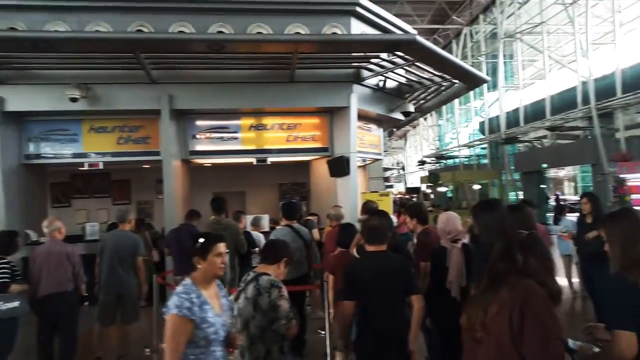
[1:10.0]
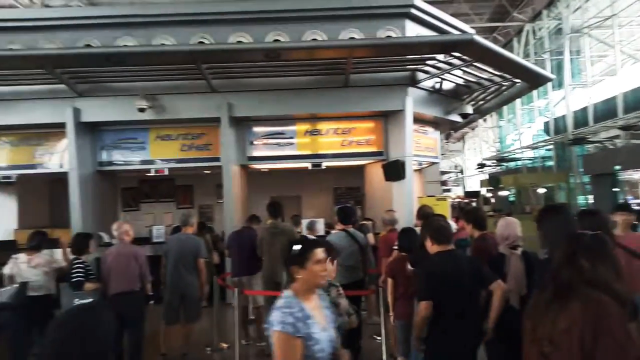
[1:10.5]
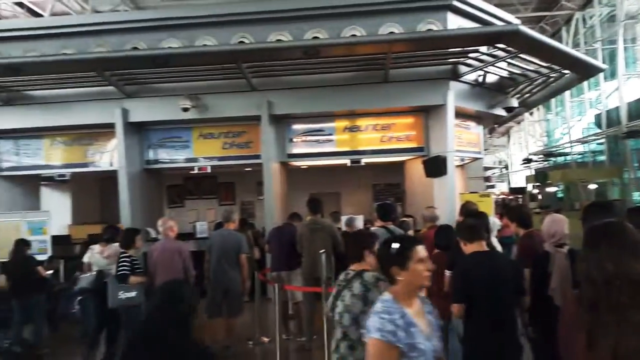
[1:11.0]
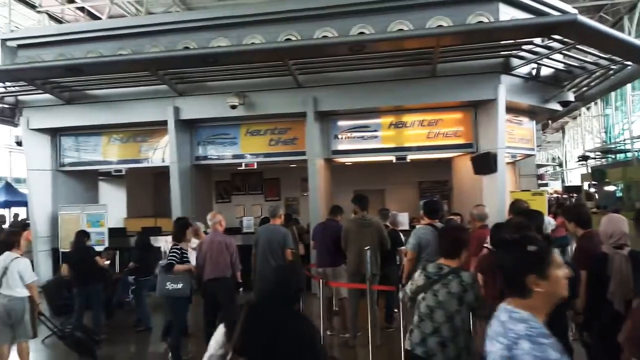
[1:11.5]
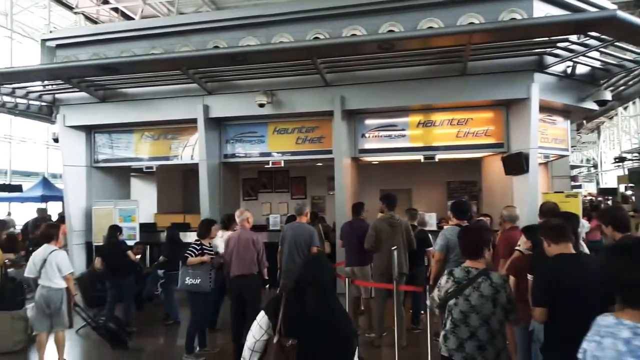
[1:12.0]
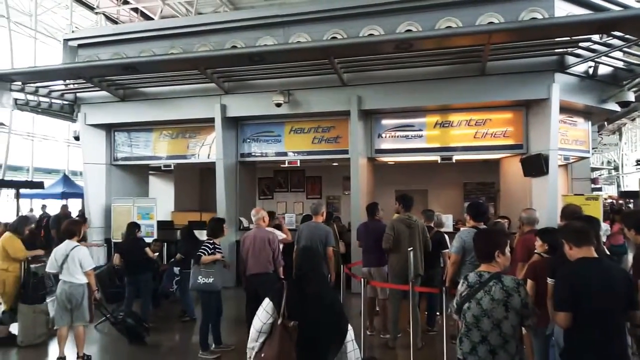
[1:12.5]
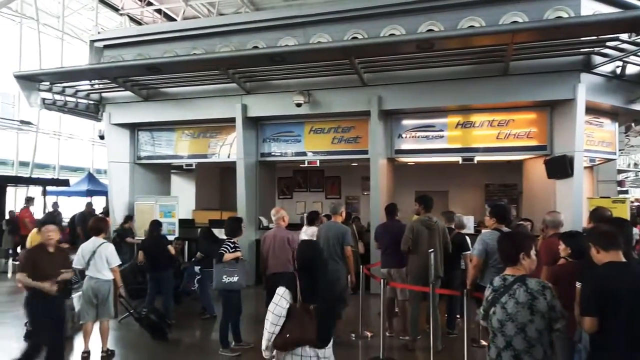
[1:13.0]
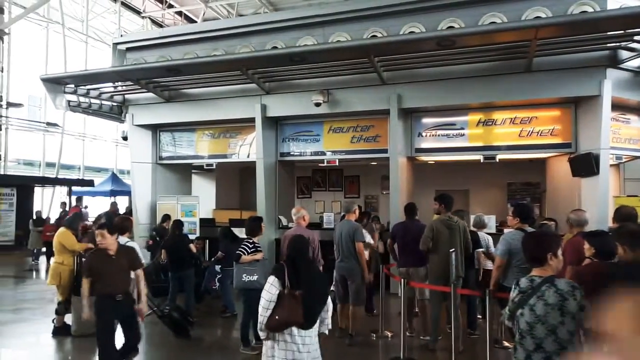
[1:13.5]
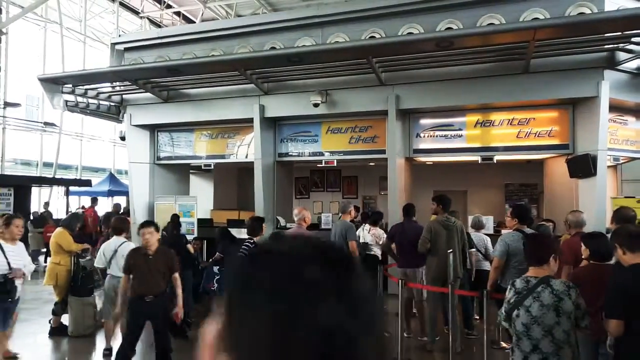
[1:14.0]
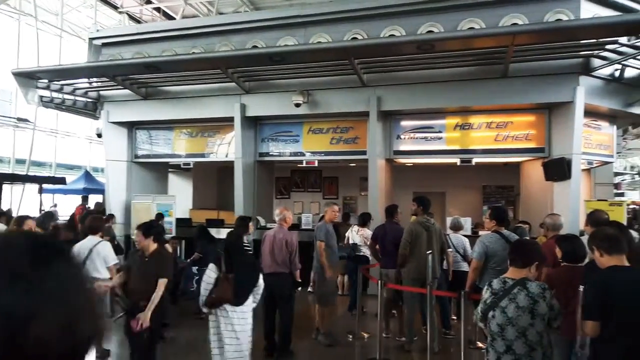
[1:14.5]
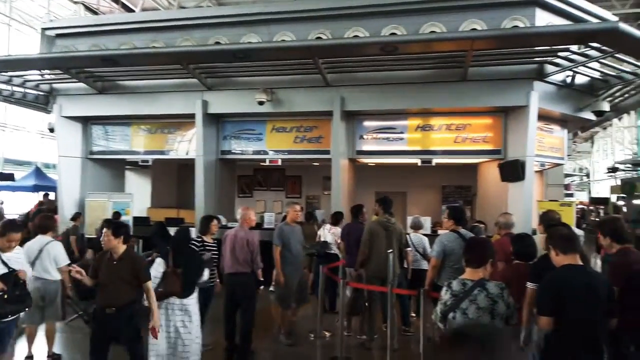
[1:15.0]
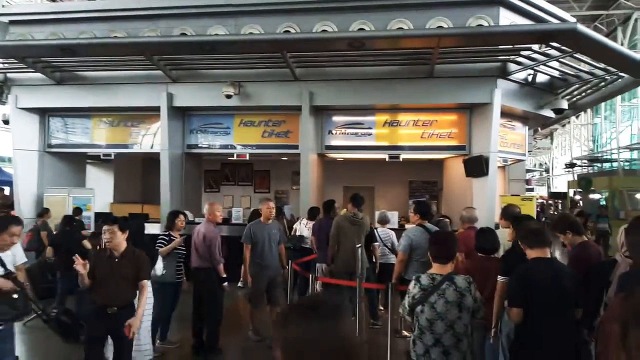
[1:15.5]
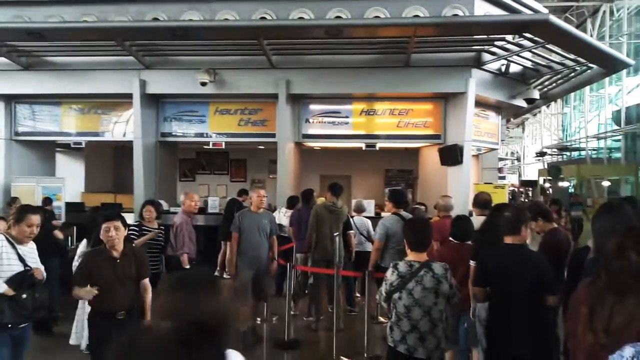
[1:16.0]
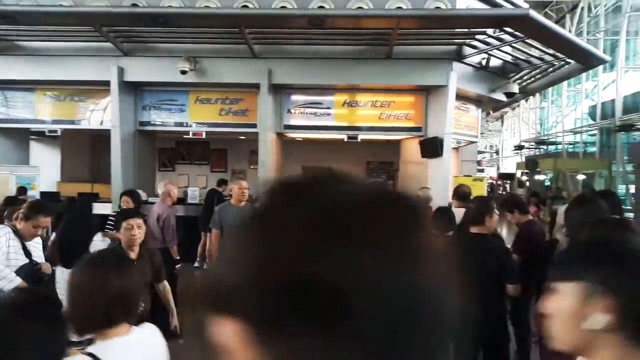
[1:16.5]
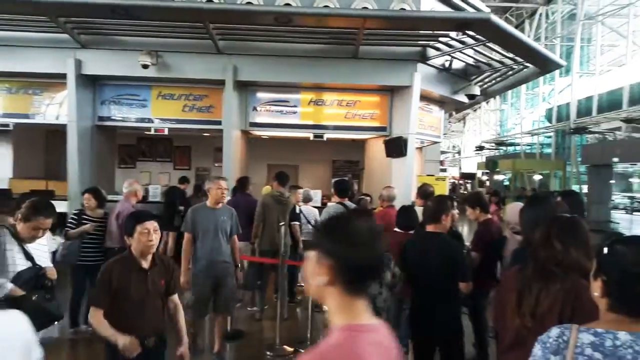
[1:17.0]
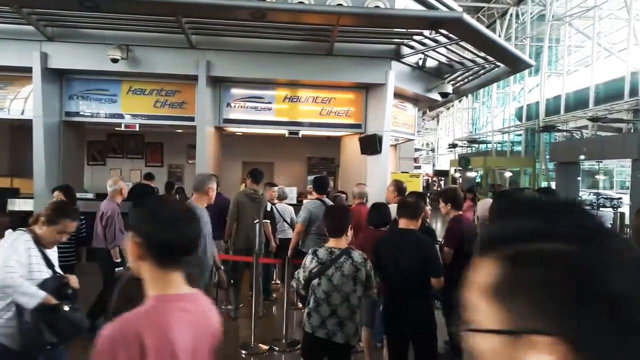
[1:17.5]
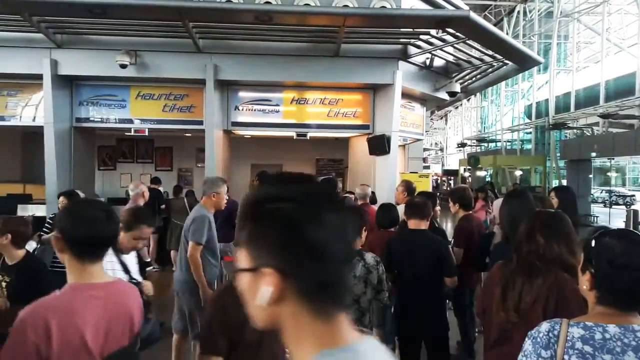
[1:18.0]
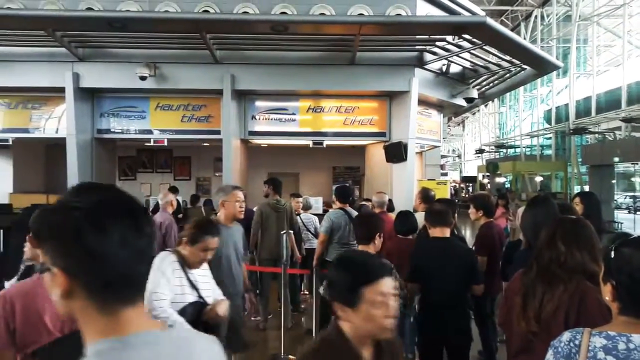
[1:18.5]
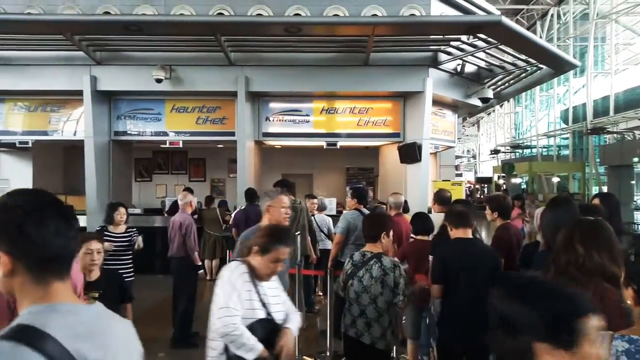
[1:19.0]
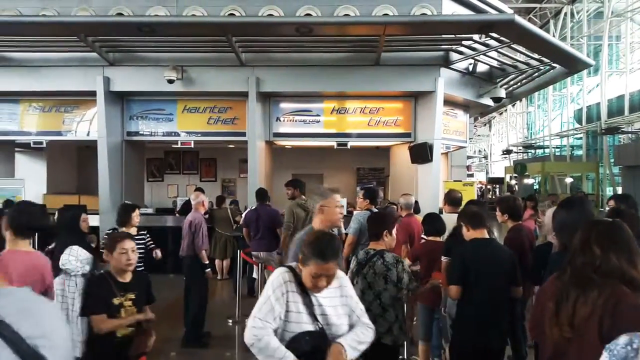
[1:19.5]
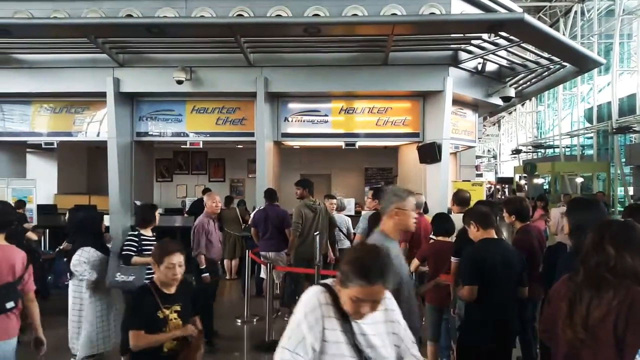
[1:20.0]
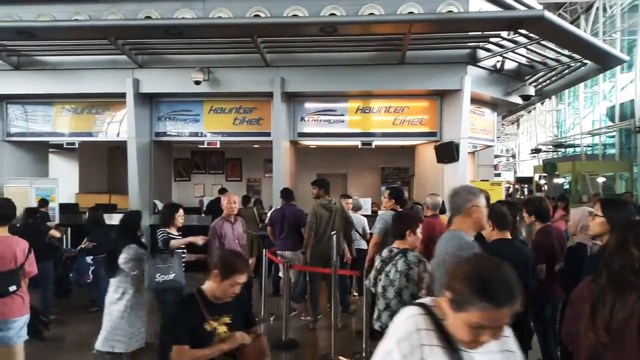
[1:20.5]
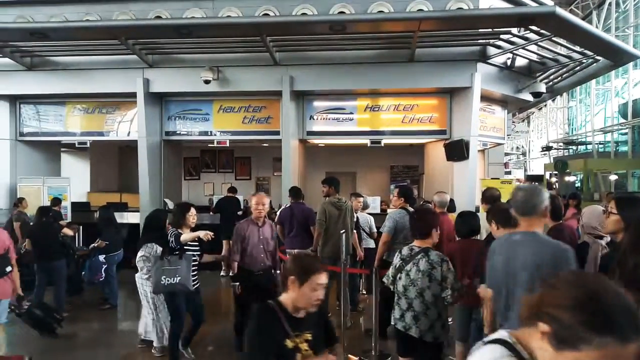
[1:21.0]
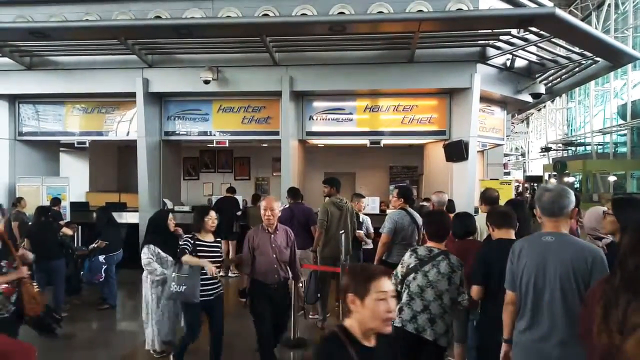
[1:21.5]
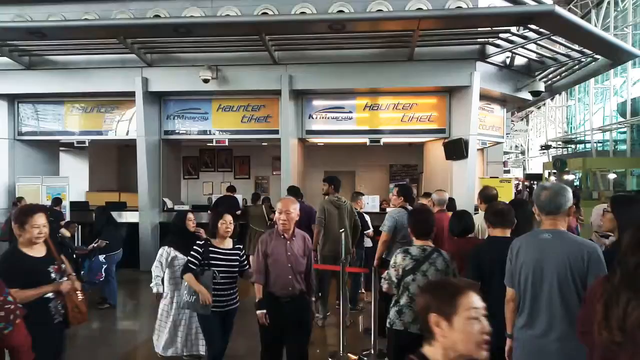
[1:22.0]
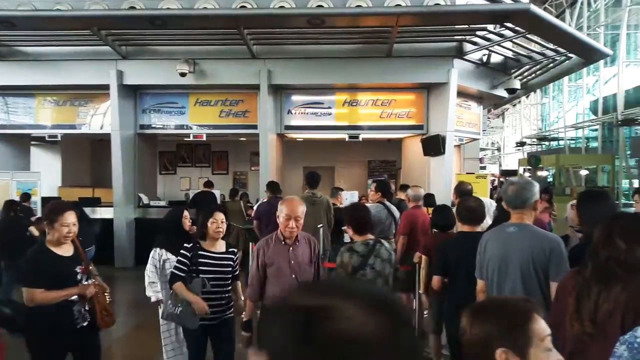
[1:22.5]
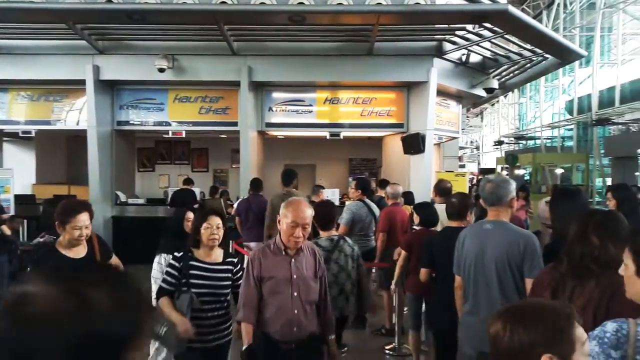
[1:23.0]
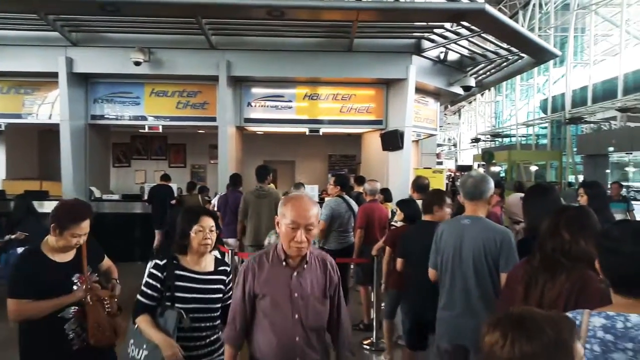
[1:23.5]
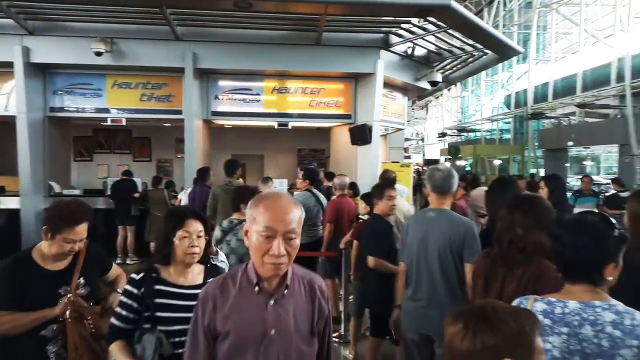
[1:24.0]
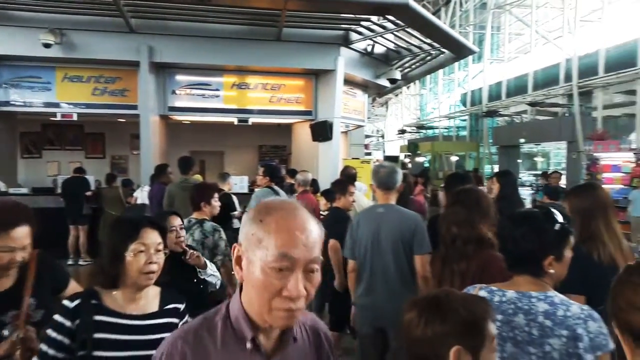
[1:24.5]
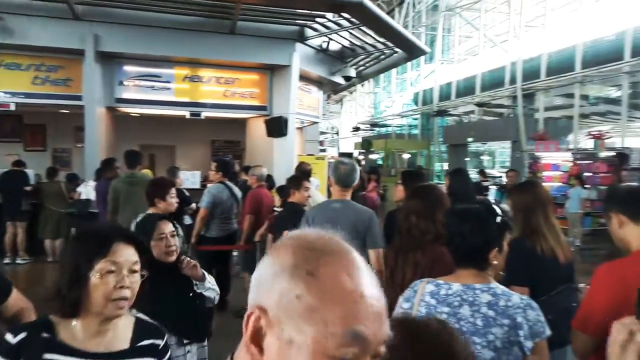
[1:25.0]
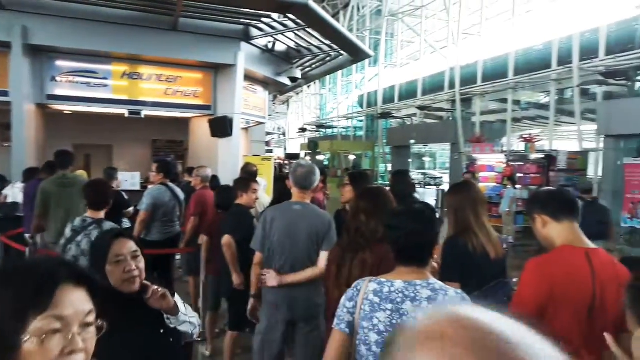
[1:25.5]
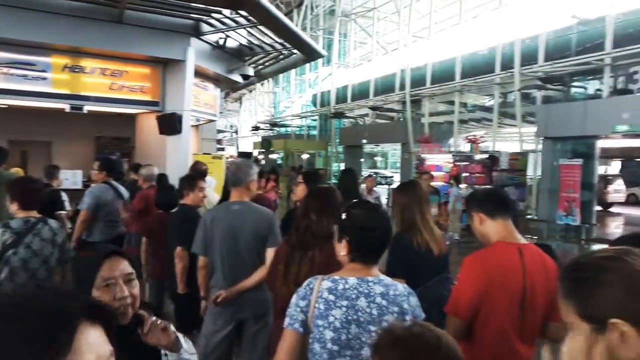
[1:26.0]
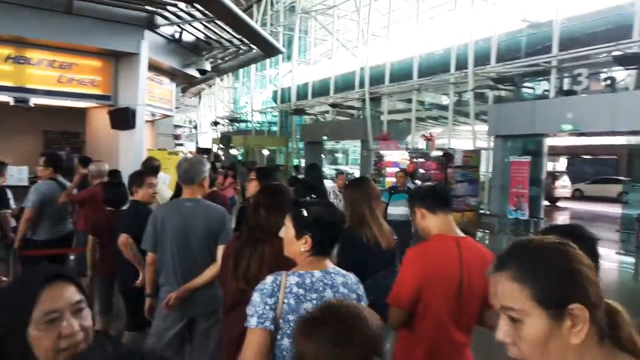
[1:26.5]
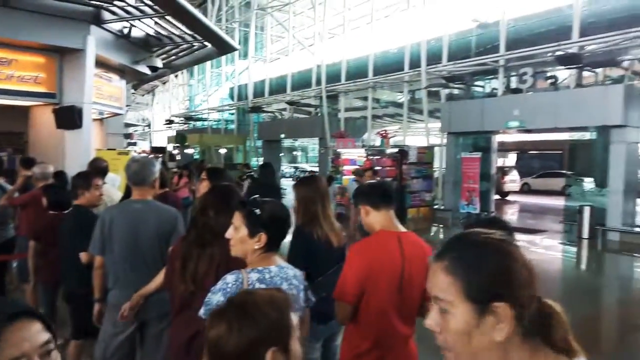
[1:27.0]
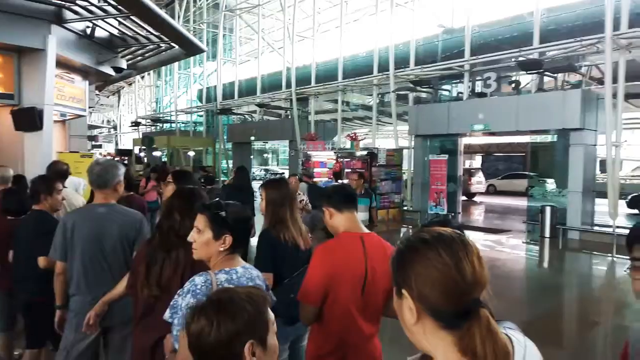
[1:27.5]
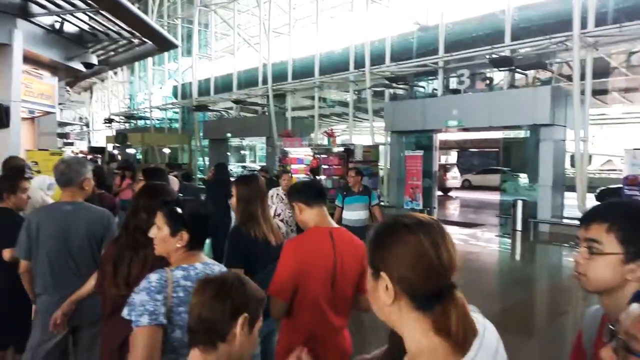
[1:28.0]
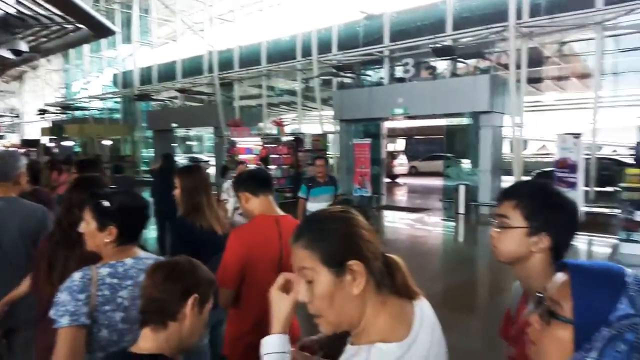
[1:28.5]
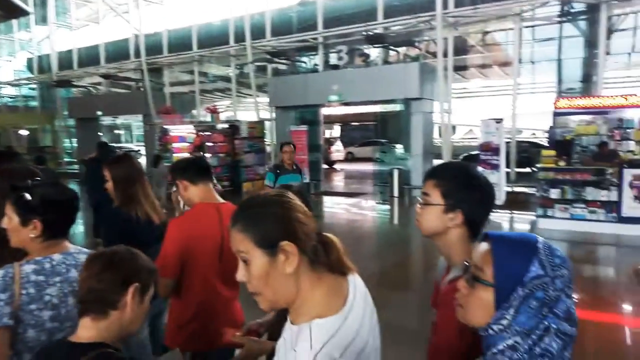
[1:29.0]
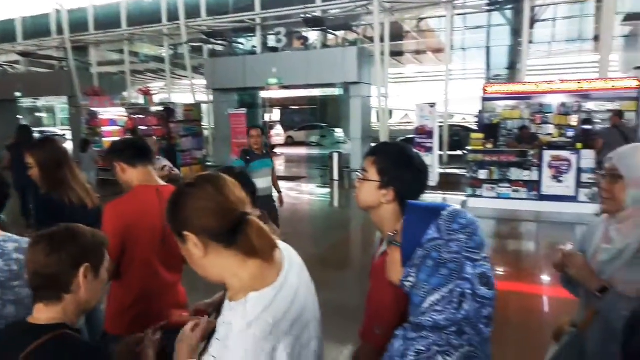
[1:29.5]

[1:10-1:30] The transit station is very large, with a very high vaulted ceiling, and sunlight filters in, showing it is daytime. The video focuses on a ticket counter with several different lines for purchasing tickets, where several dozen people are already standing in line. The lines appear to be roped off with bollards and ropes to keep people organized. As the video progresses, the line gets bigger as more people begin queuing up at the end of the line in pairs. Many of the people moving around the transit station carry backpacks, bags, and luggage, and several people in line have bags and luggage as well.